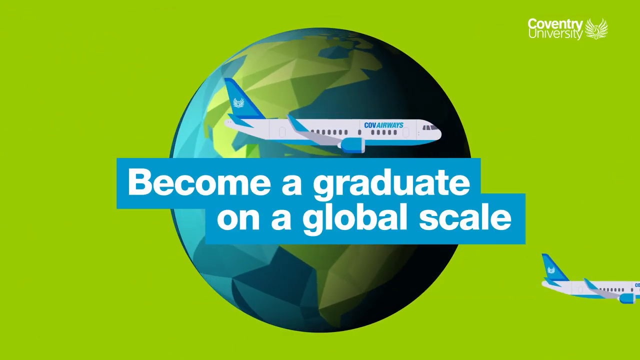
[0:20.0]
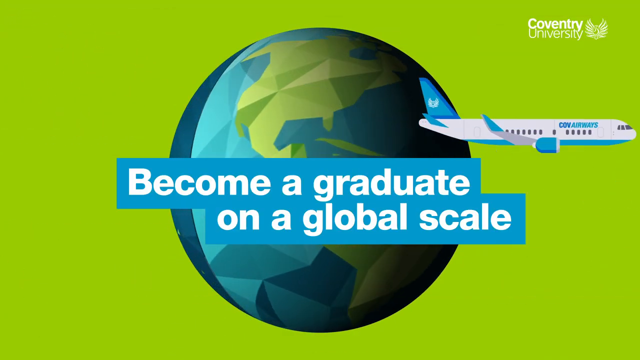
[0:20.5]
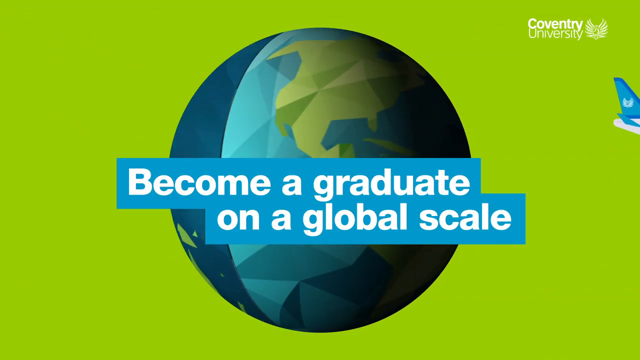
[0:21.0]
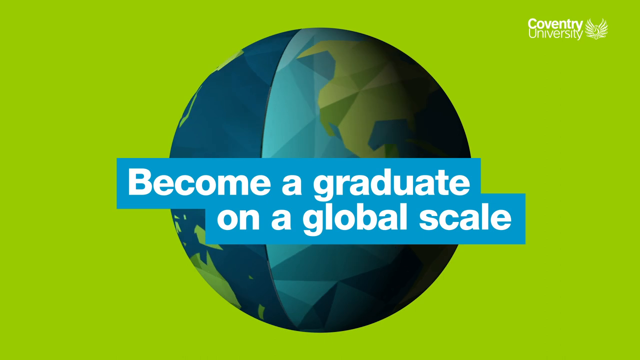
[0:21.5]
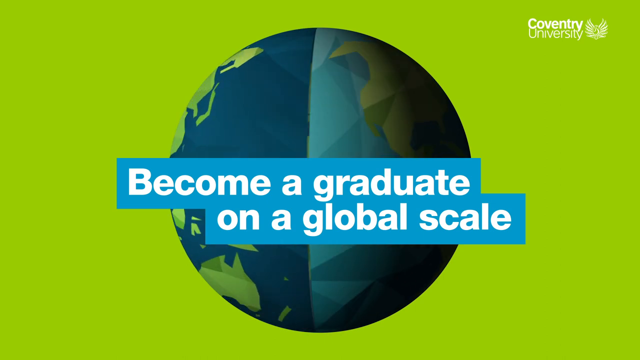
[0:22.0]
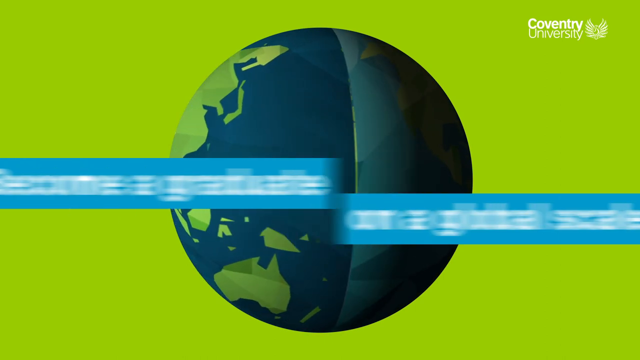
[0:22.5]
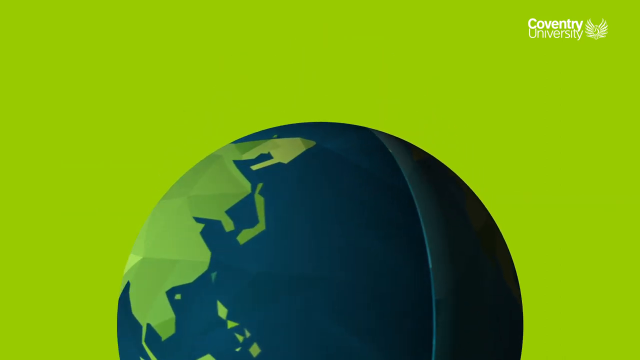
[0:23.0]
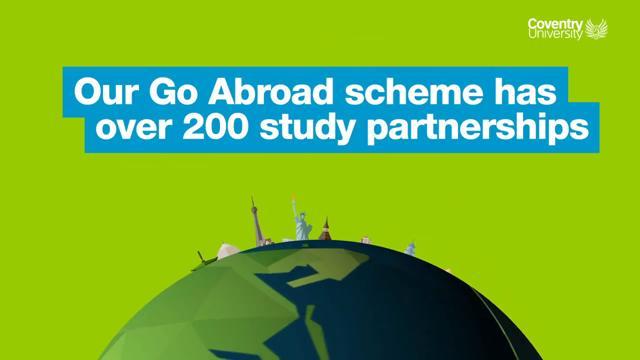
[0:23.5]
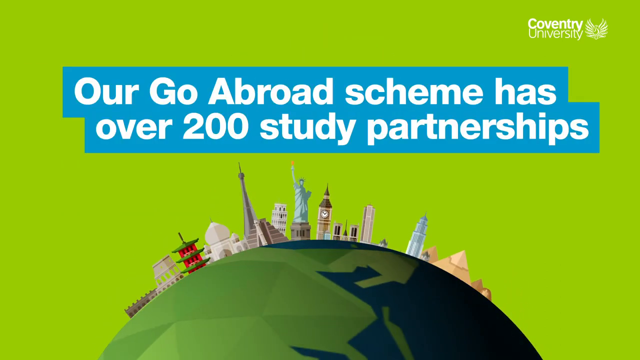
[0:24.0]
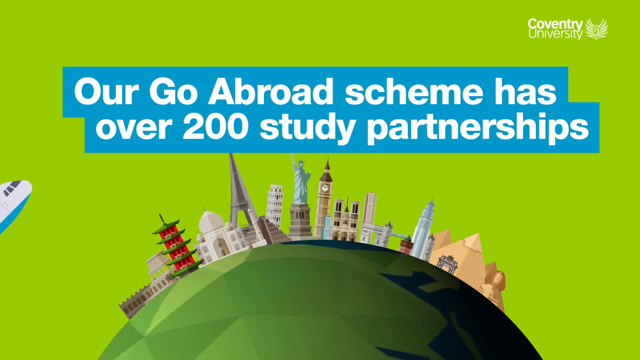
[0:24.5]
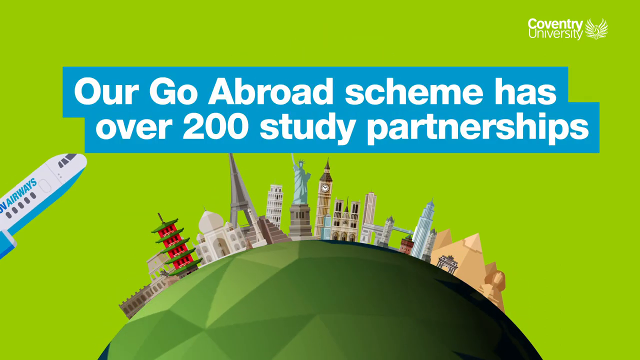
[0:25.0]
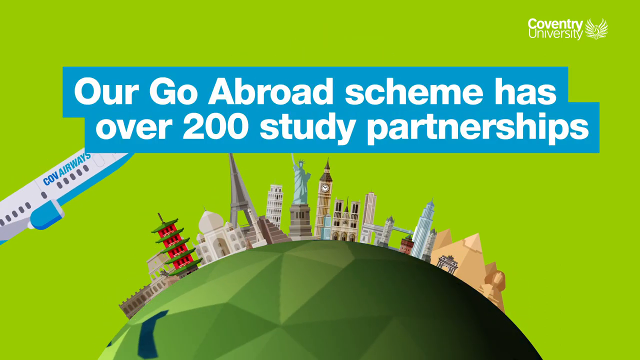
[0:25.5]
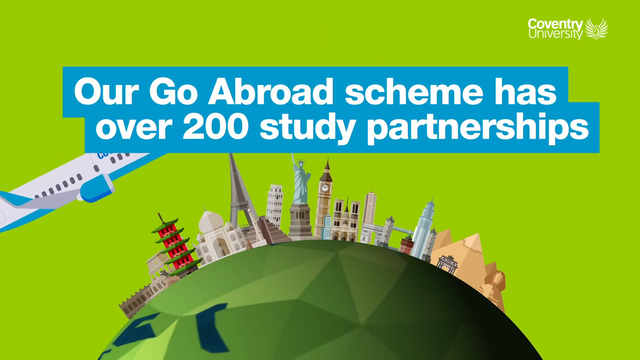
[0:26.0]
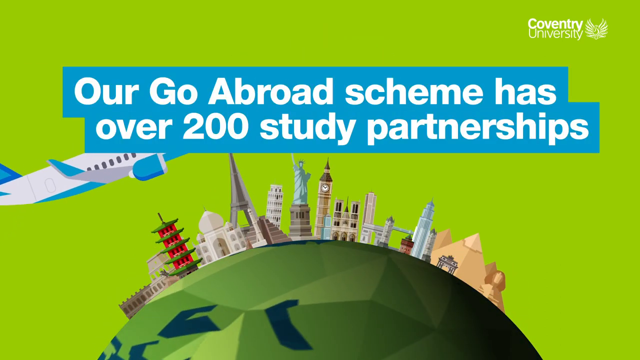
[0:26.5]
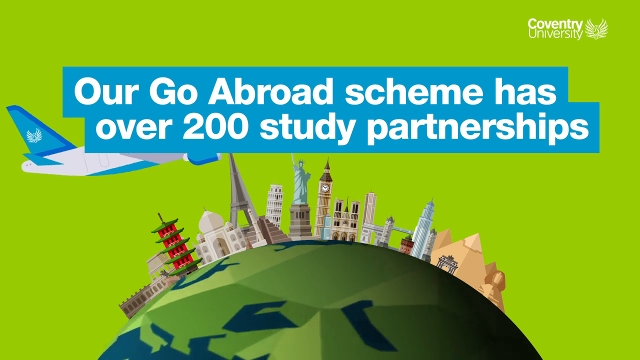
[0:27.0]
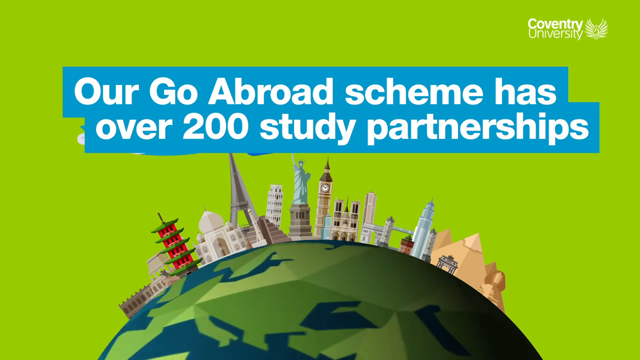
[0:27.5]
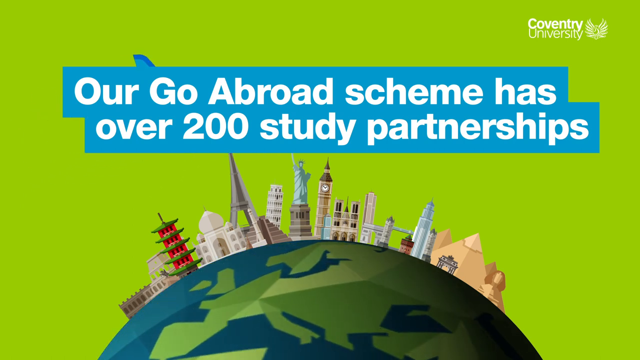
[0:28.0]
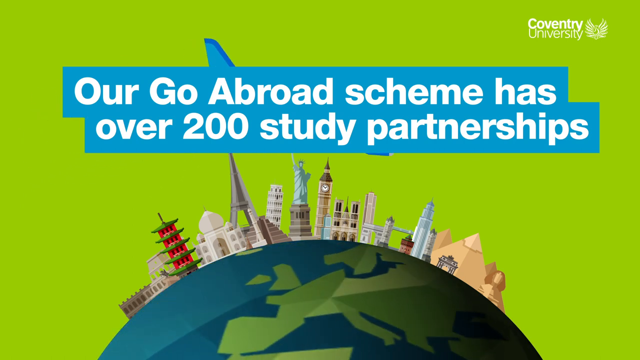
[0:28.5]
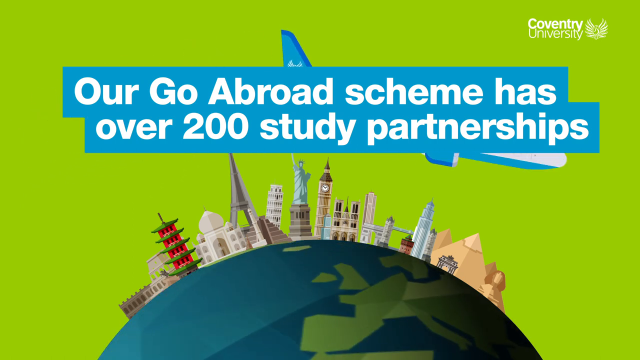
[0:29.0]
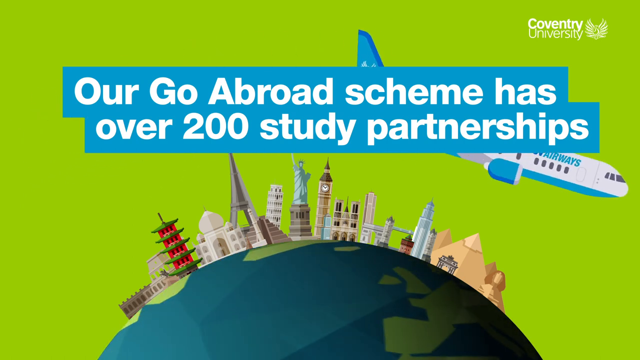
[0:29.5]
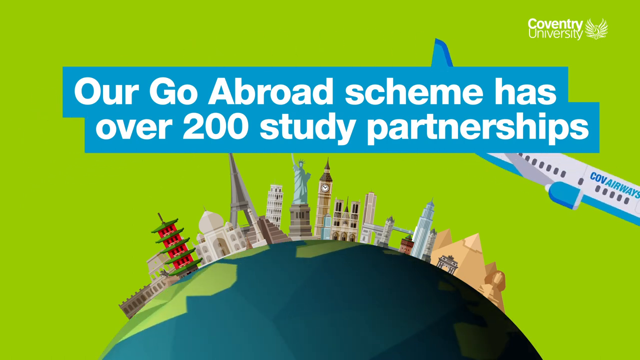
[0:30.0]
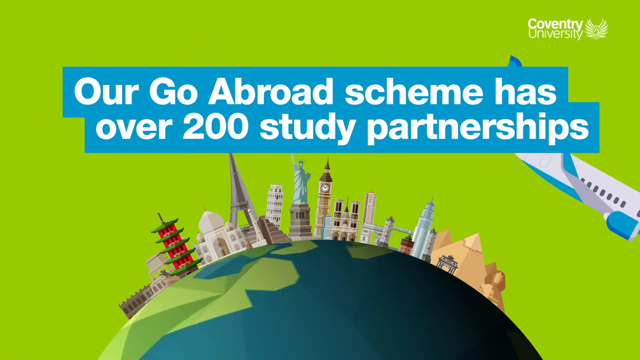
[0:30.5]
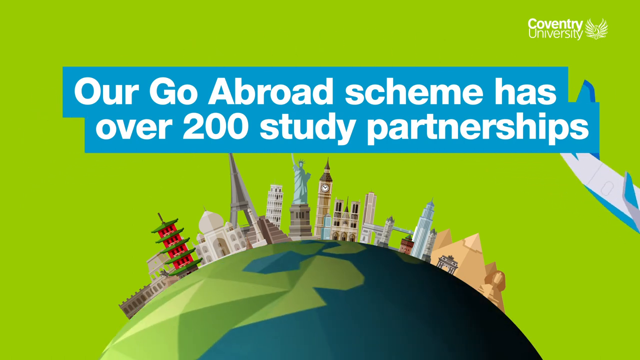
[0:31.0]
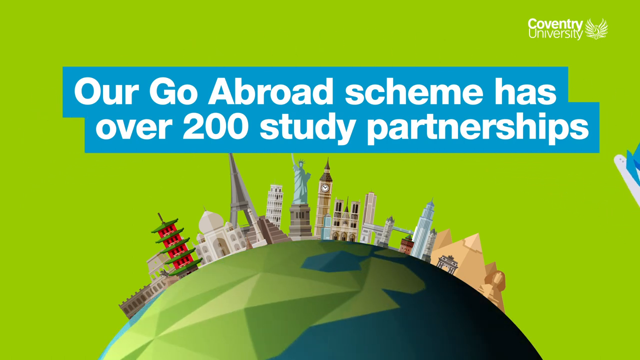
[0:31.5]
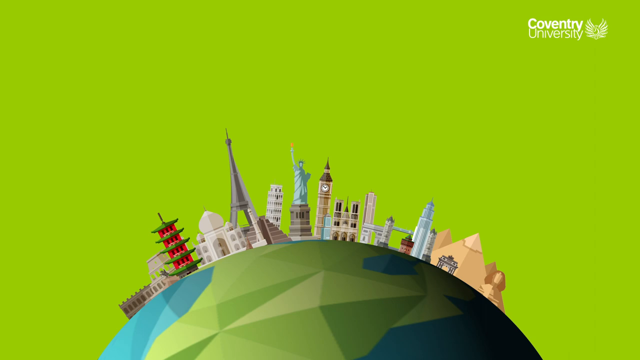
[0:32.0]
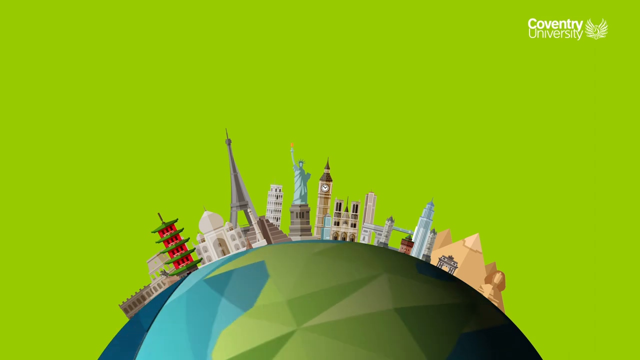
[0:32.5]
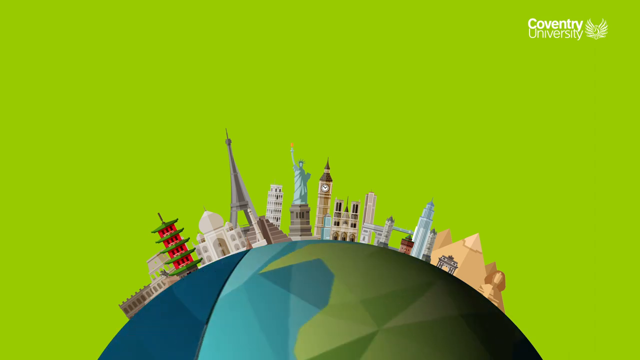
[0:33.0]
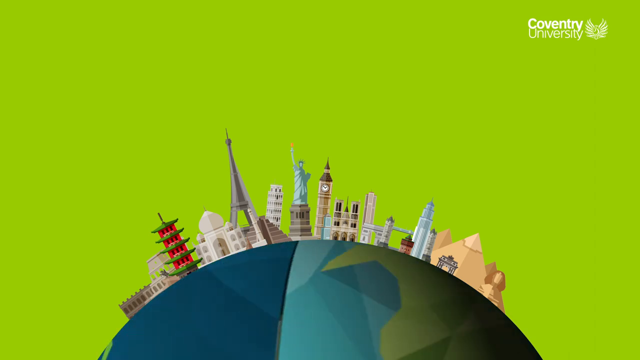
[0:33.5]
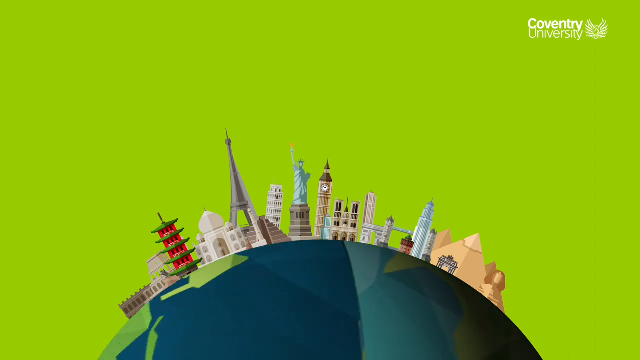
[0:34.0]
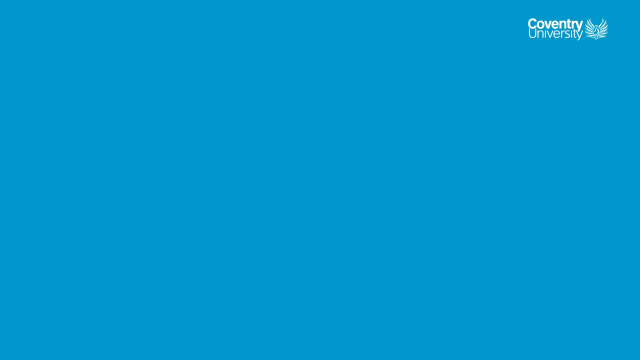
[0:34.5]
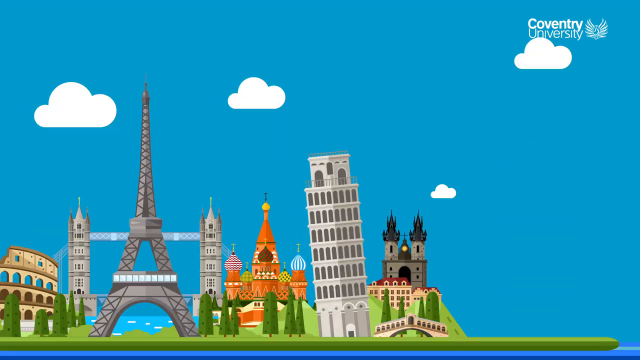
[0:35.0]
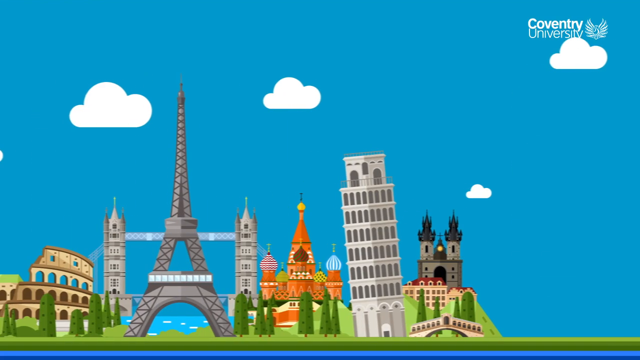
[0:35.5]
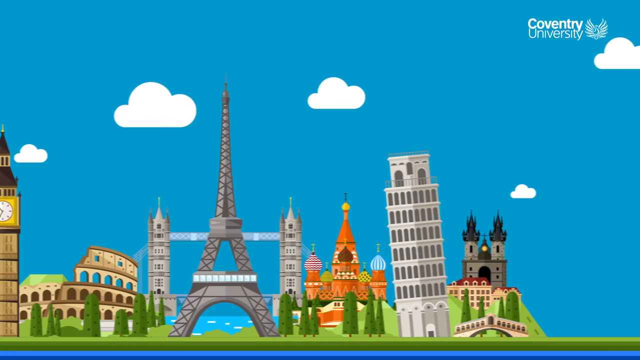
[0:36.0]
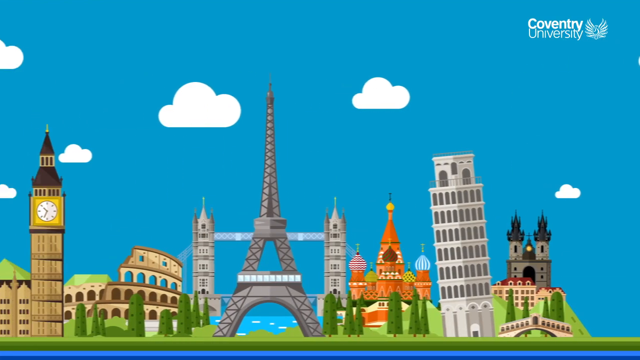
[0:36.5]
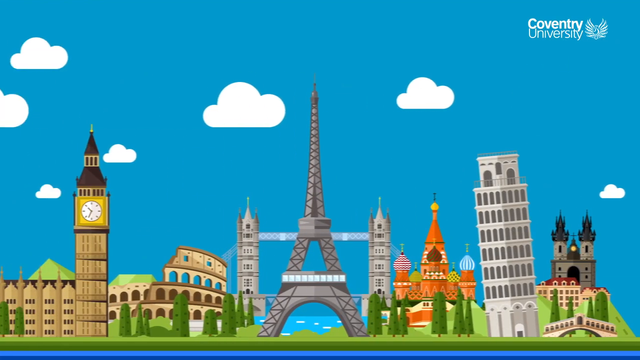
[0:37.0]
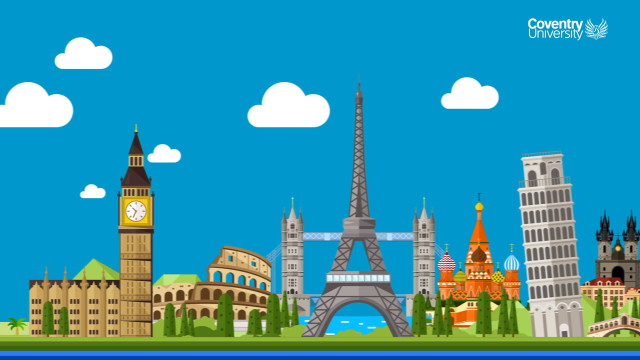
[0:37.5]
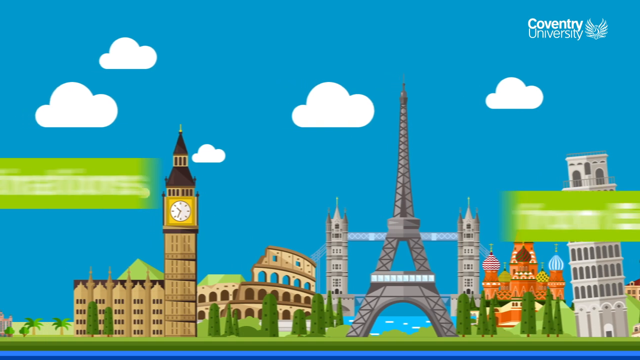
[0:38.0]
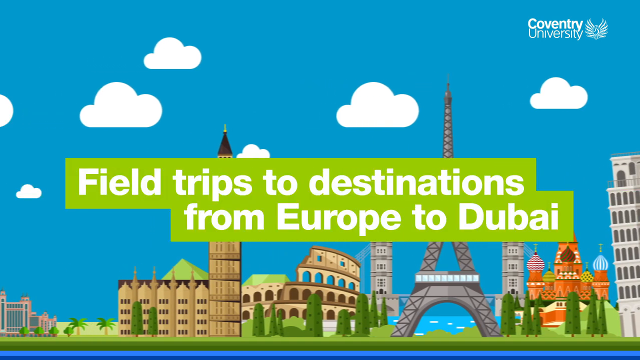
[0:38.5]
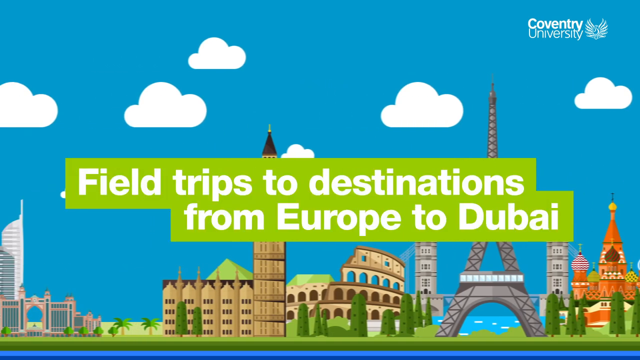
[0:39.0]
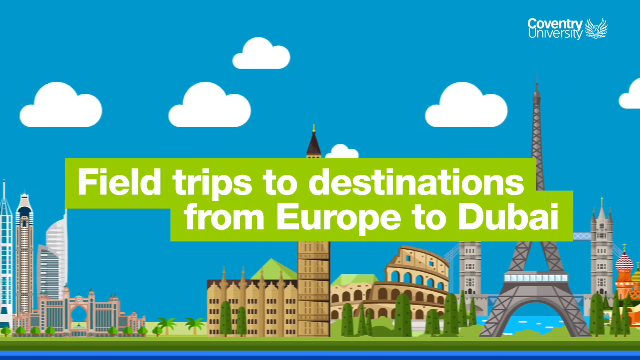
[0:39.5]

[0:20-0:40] The round globe is blue, with all of the countries outlined in green. A white and blue airplane flies across the page. In the top right corner, the page reads "Coventry University," and in the middle, in bold white lettering, "become a graduate on a global scale." As the world spins, the next page appears, with bold white lettering reading "Our Go Abroad scheme has over 200 student study partnerships." As the page opens up, the globe kind of falls down and lots of buildings pop up behind it, including the Statue of Liberty, Big Ben and the Leaning Tower of Pisa; quite a few buildings pop up in the background. The airplane seems to travel over the globe as the globe rotates. The next page shows the Eiffel Tower, the Leaning Tower of Pisa and Big Ben, with bold white lettering reading "field trips to destinations from Europe to Dubai." The final page, with the Leaning Tower of Pisa and the Eiffel Tower, has a blue skyline with white clouds.